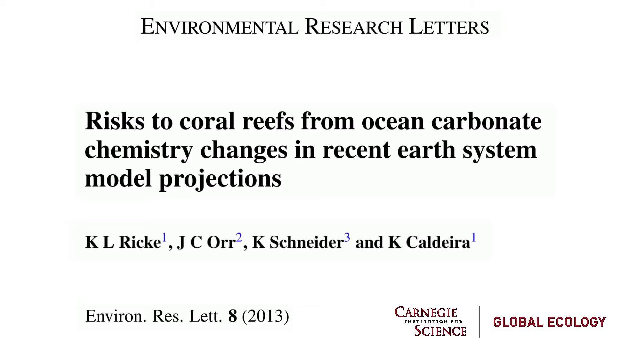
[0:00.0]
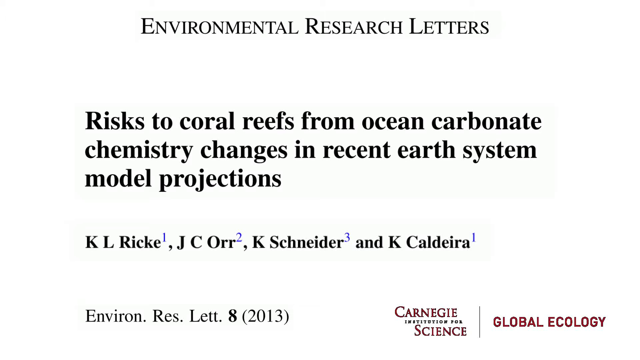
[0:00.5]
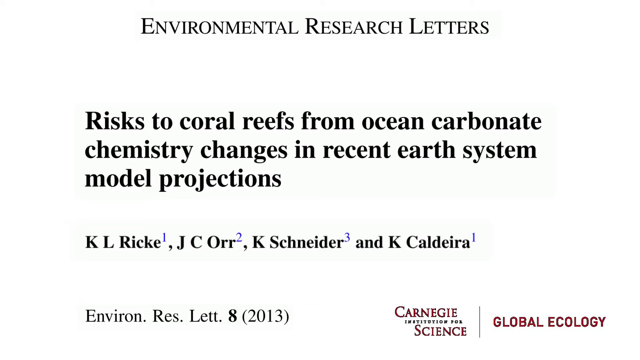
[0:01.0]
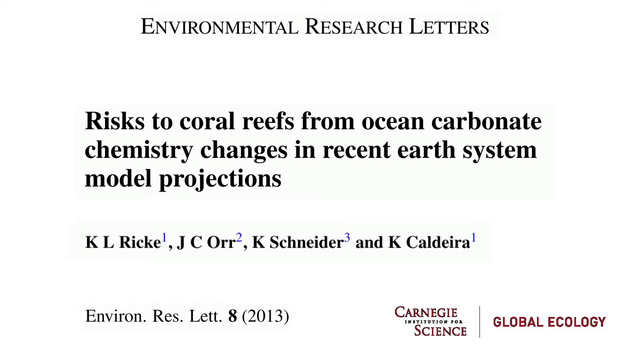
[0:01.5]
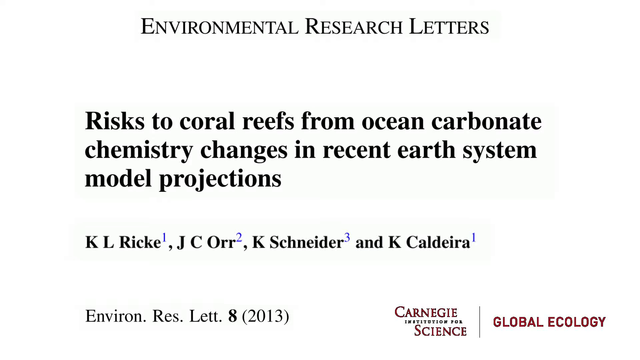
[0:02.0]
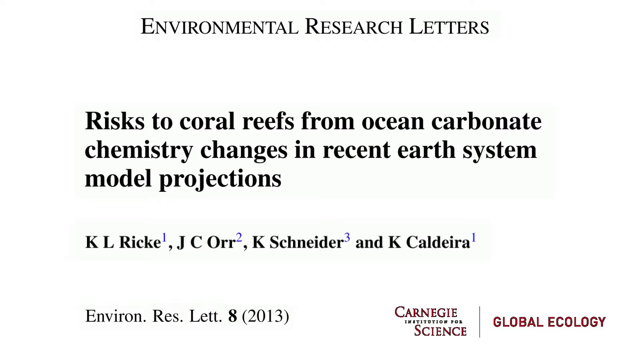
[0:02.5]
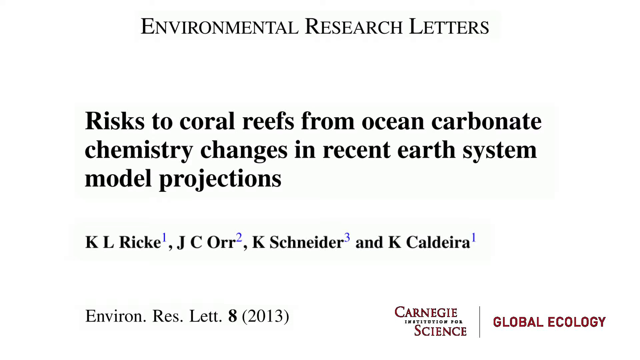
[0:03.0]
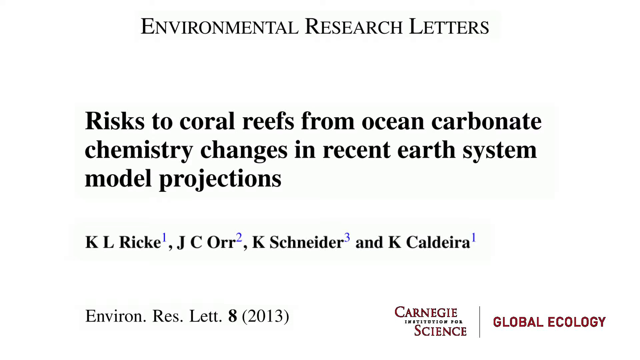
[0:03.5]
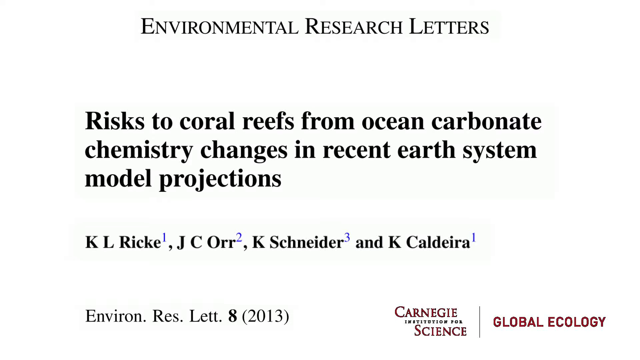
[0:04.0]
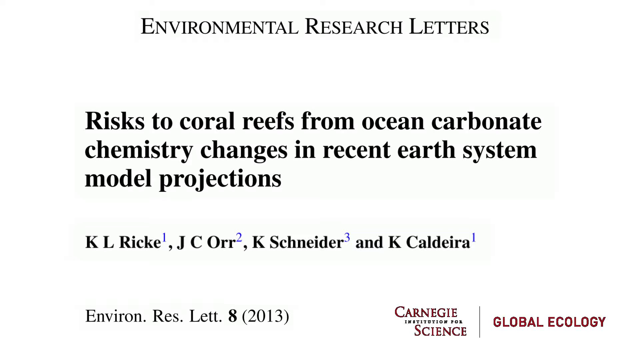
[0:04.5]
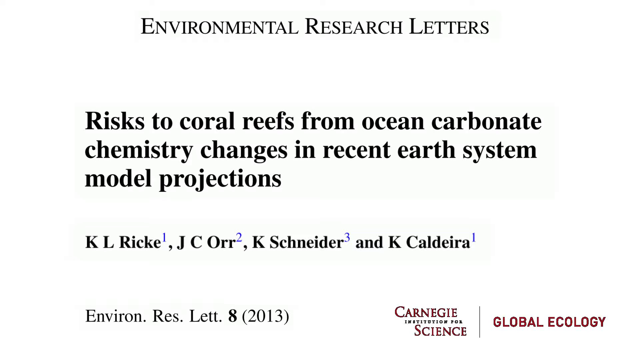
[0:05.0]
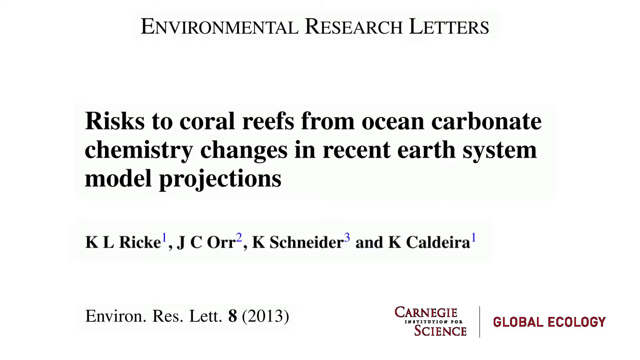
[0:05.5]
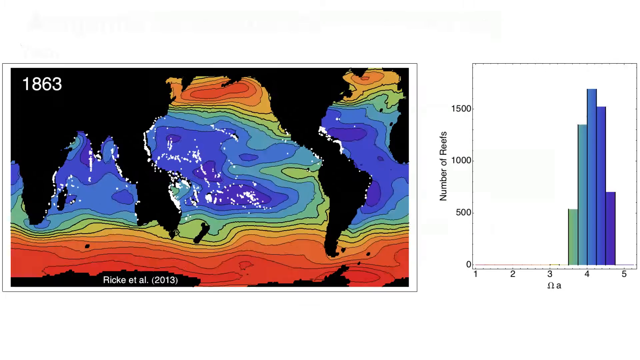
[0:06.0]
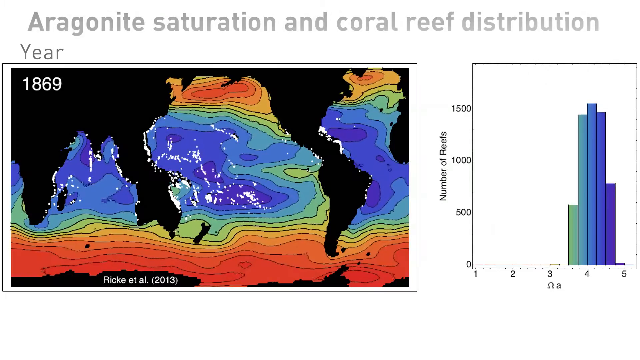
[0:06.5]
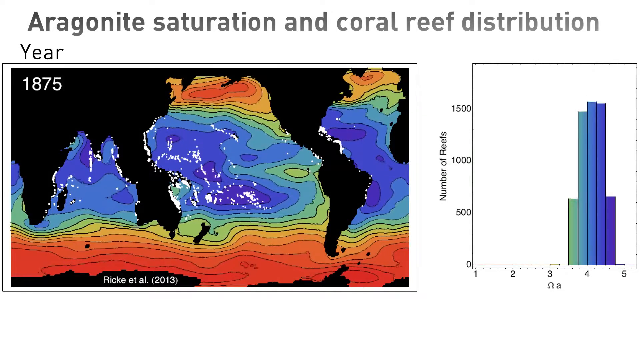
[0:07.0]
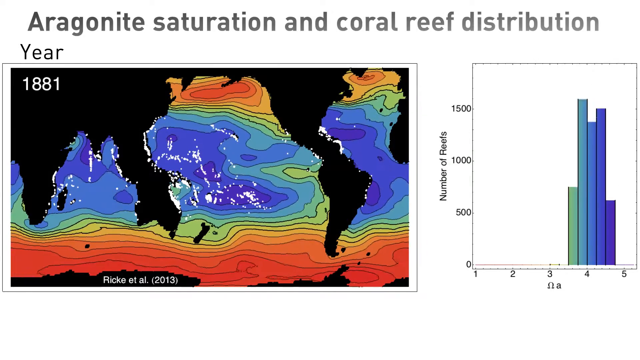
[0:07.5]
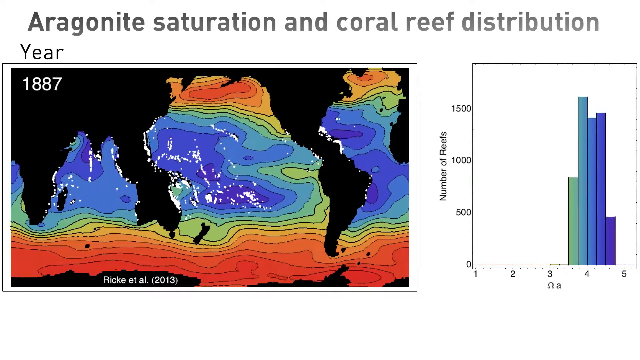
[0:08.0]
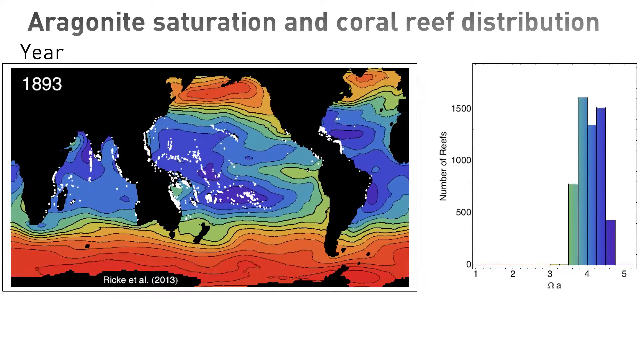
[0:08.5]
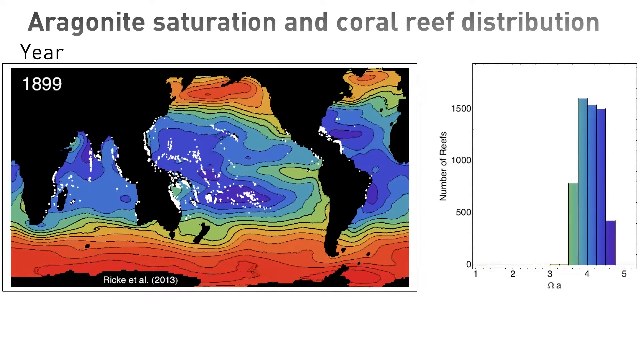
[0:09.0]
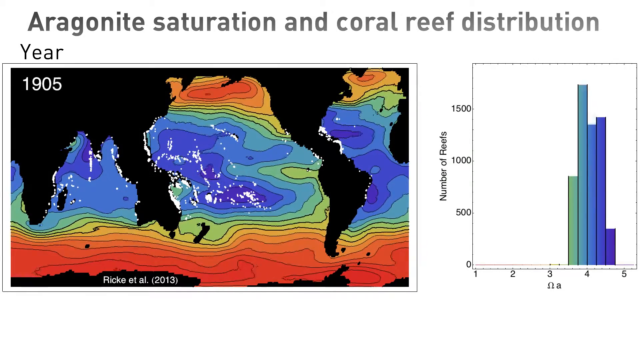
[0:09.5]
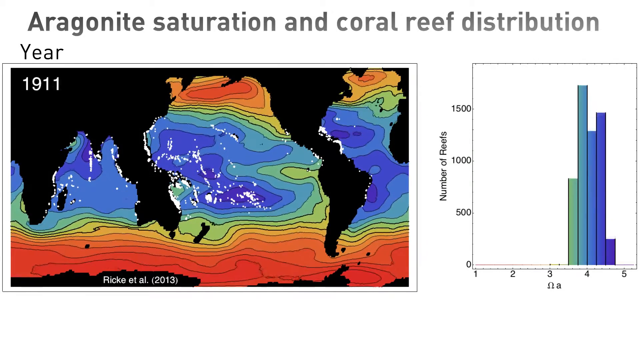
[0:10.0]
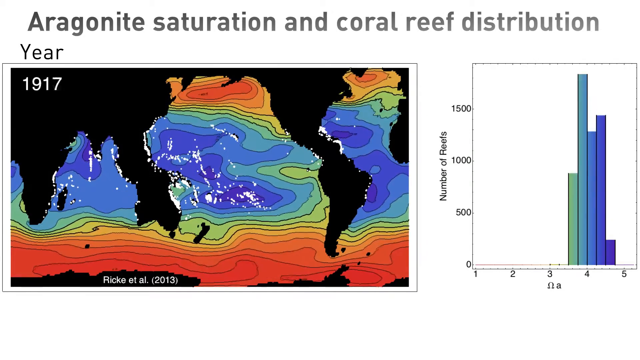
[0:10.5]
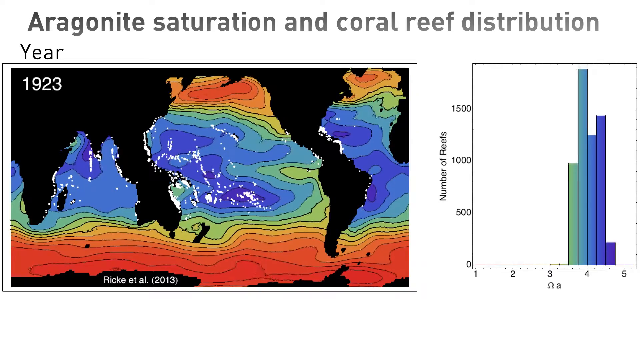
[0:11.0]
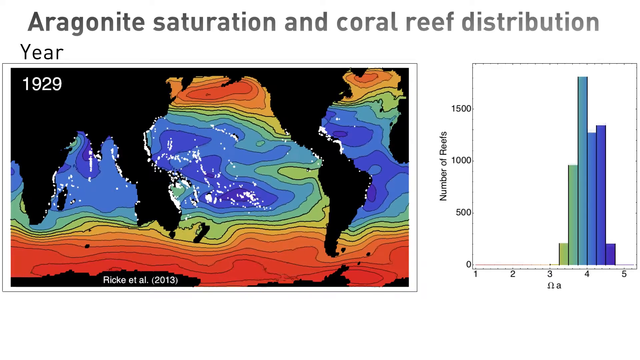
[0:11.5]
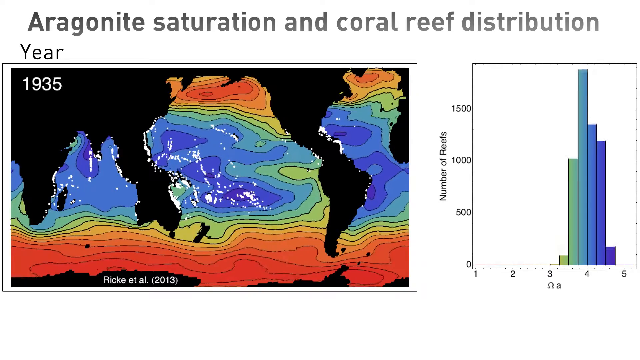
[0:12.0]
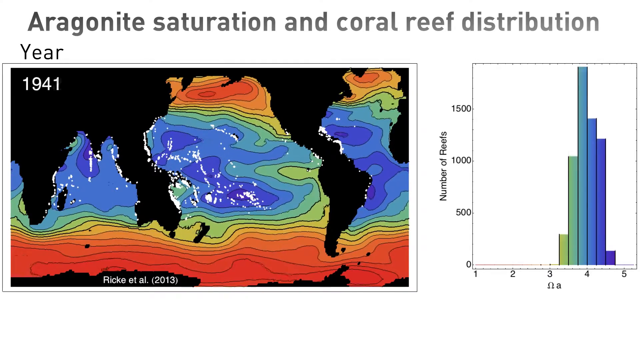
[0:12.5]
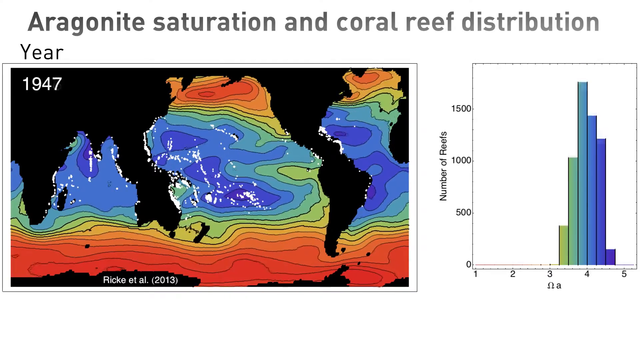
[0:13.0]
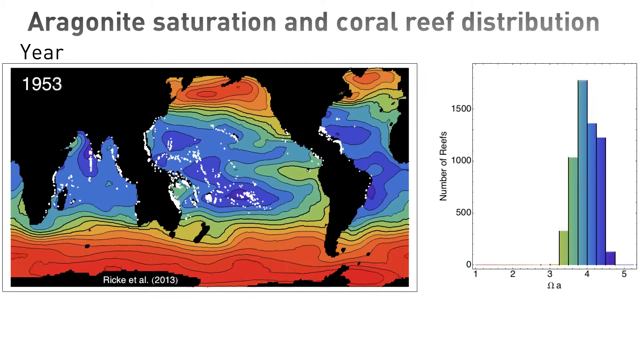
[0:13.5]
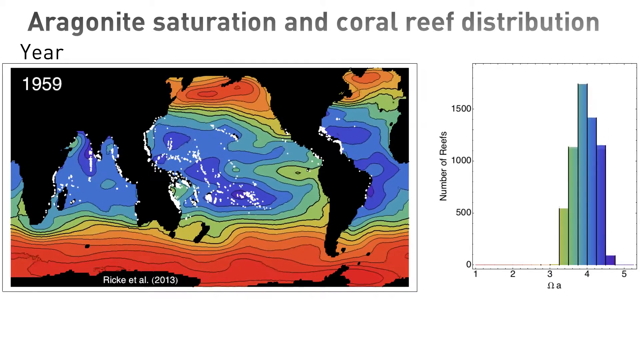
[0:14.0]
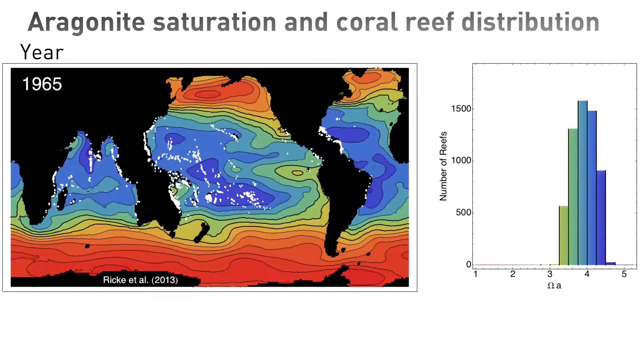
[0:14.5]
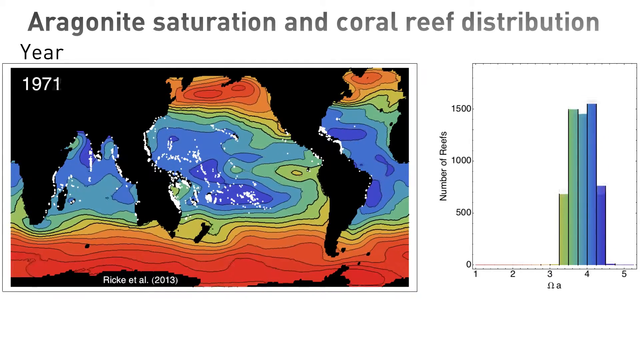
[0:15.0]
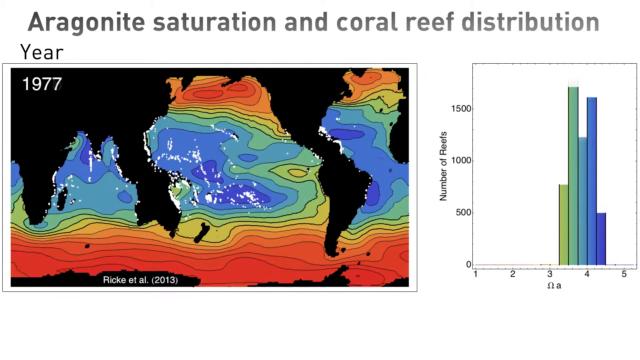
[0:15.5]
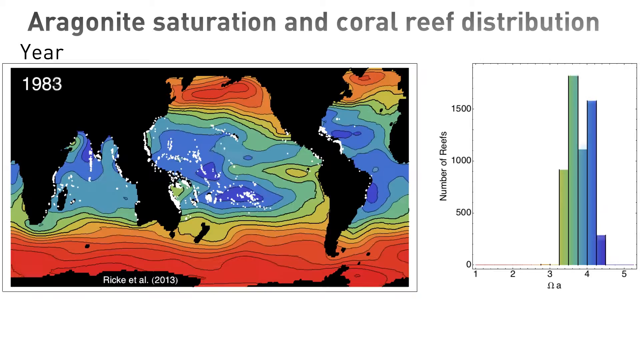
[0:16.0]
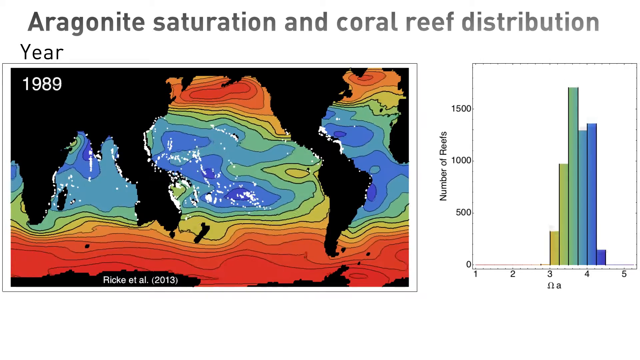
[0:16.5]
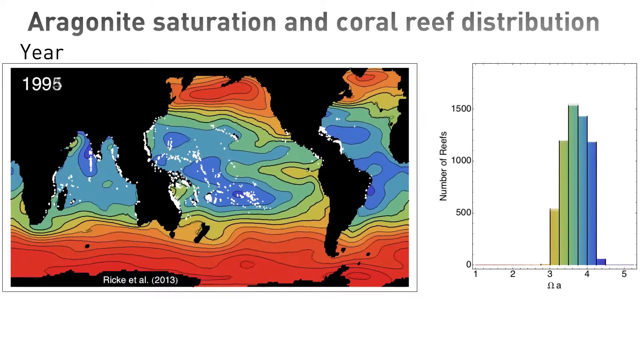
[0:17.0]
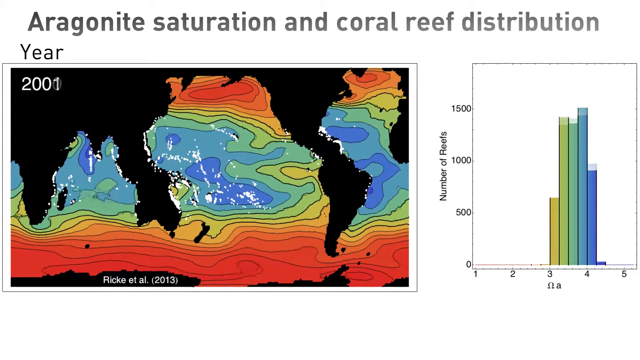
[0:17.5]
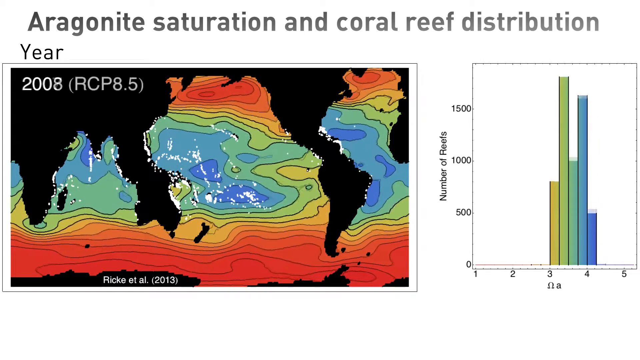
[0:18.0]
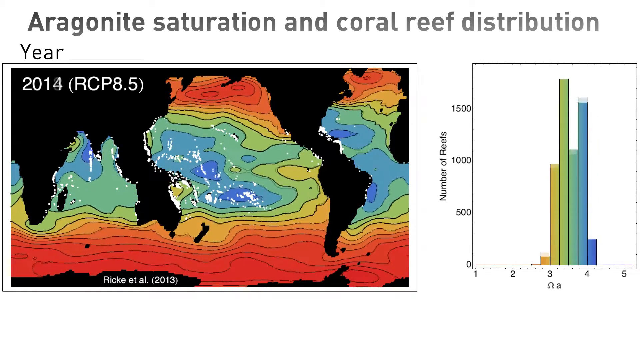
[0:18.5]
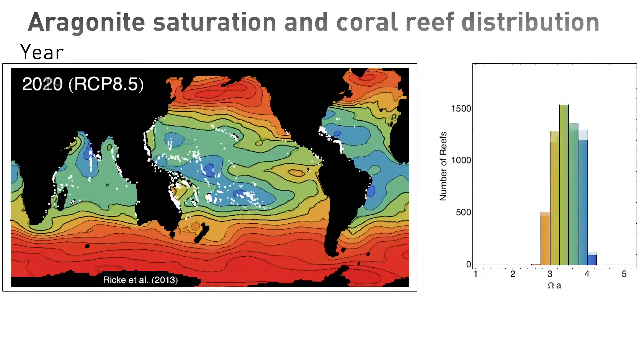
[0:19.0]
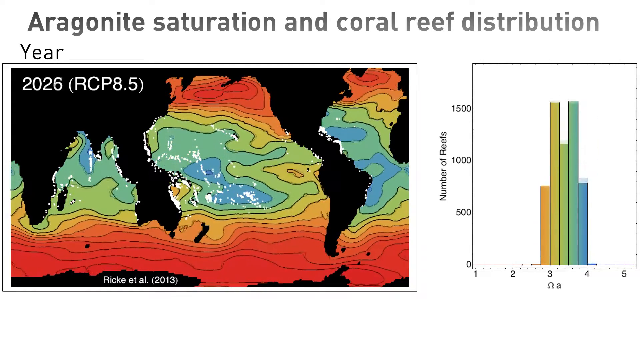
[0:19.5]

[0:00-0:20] A white page appears with a title at the top that reads "ENVIRONMENTAL RESOURCE LETTERS" in all capitals. Beneath it is a sentence that begins "Risks to Coral Reefs" and includes "Carbonate Chemistry, Changes in Recent Earth System Model Projections." Below that are the names of a couple of the authors, each with a letter and a number assigned to it. The view then switches to another page. On the left side is a big square that looks like the Earth showing some kind of currents moving. Land areas are black, while the ocean shows a mixture of blue that transforms into gray, green, yellow and orange. In the upper left corner the number 1870 appears, with "Year" above it. On the right side is a graph labeled "Number of Reefs," with a scale running from zero to past 1500 and the numbers one through five across the bottom. Bars stick up between three and five, the tallest right in the middle of the graph at the number four. As the year on the left keeps increasing, the graph on the right changes very quickly, though the tallest sections are mostly above the 4. By 1985 the tallest part is halfway between 3 and 4. At 2007 the bars are still tall between 3 and 4 but closer to 3. By the year 2028 the tall lines start moving toward the left of the graph.